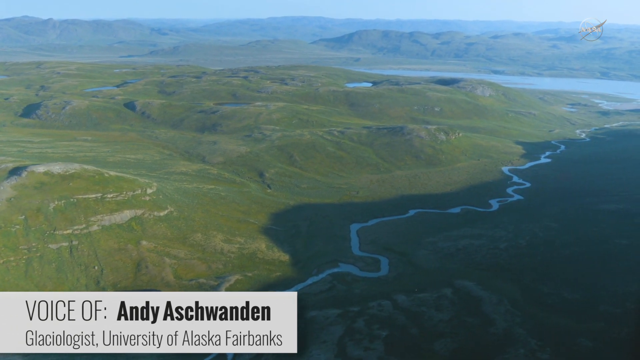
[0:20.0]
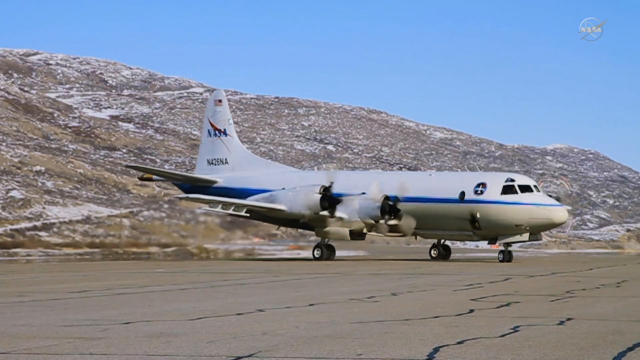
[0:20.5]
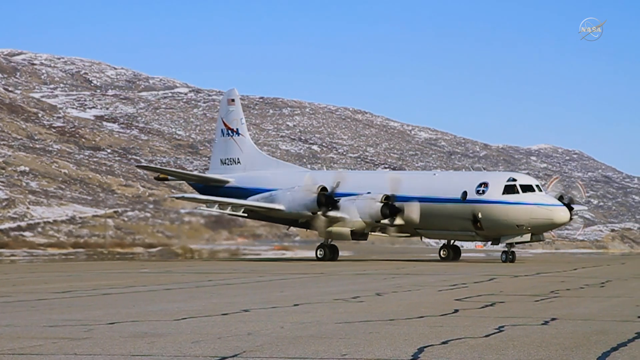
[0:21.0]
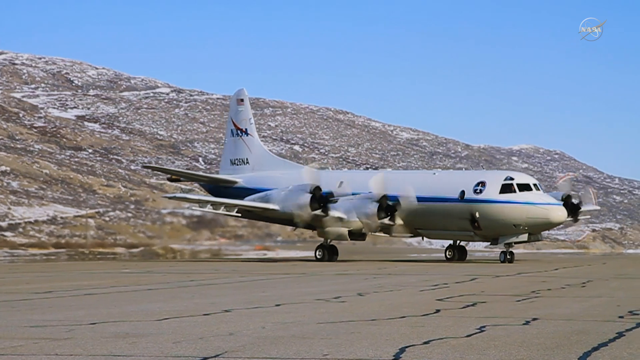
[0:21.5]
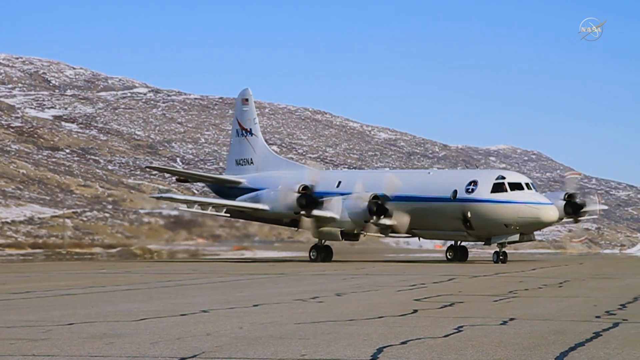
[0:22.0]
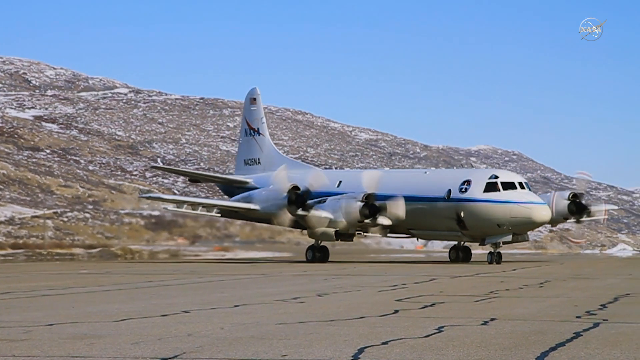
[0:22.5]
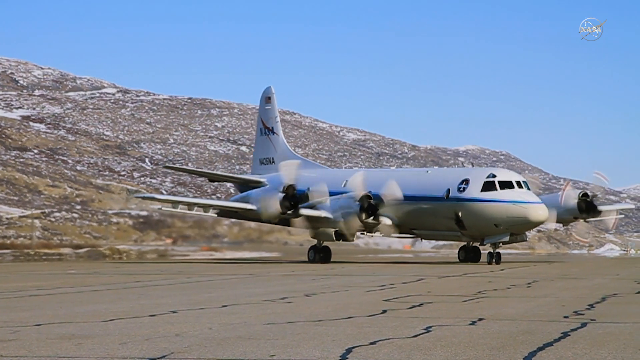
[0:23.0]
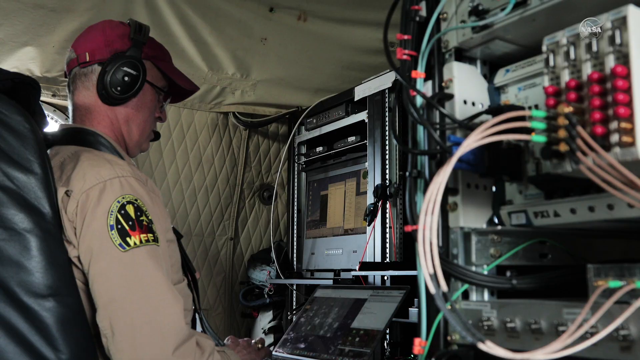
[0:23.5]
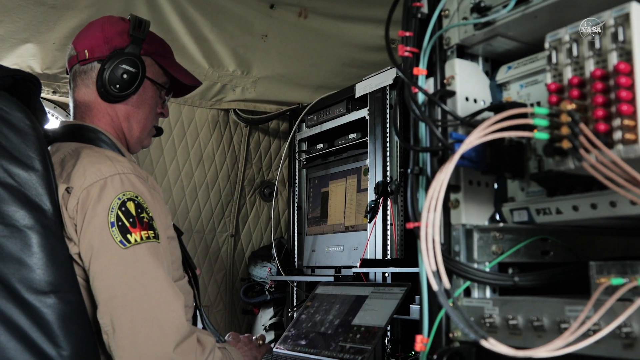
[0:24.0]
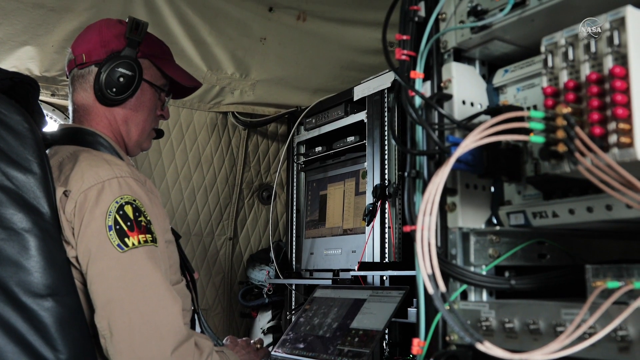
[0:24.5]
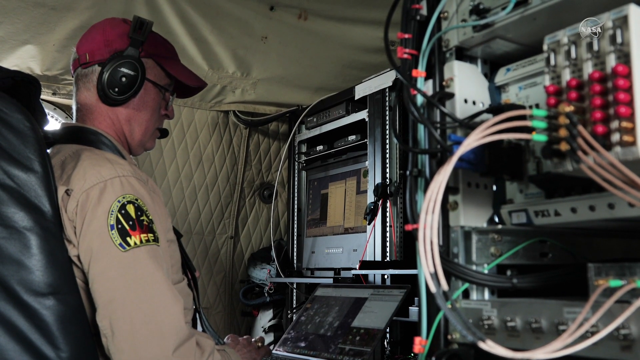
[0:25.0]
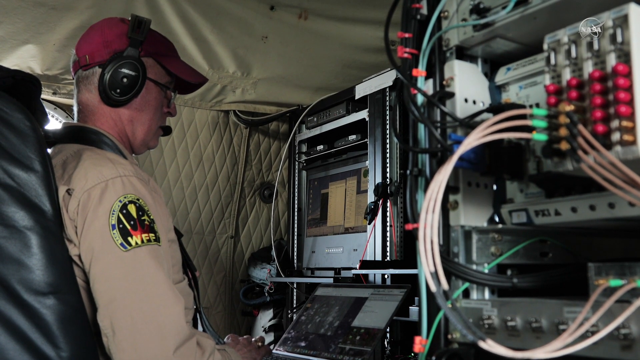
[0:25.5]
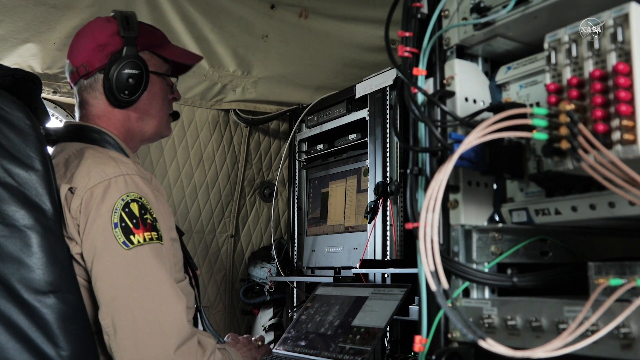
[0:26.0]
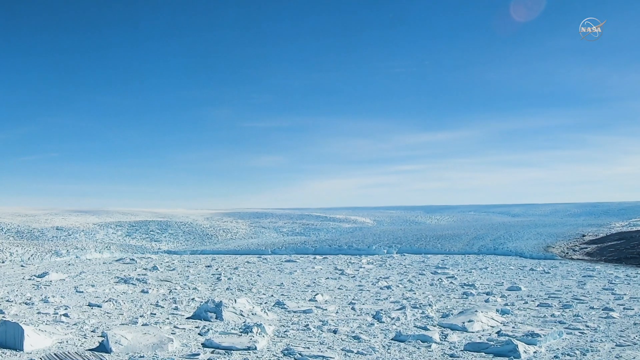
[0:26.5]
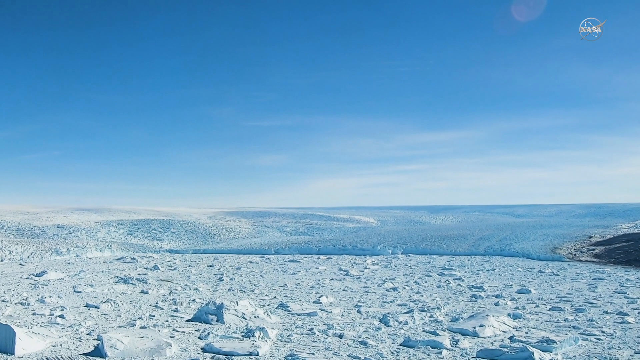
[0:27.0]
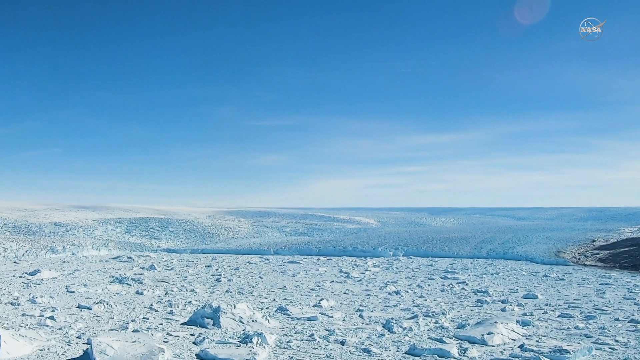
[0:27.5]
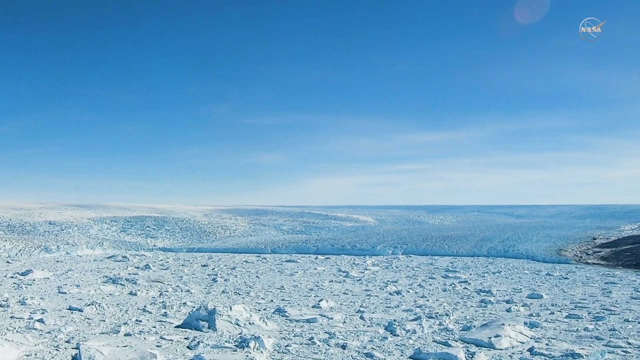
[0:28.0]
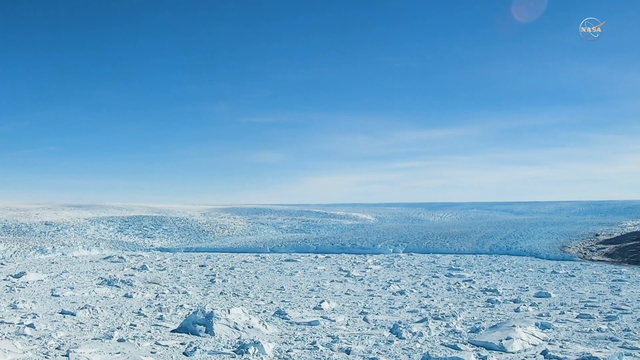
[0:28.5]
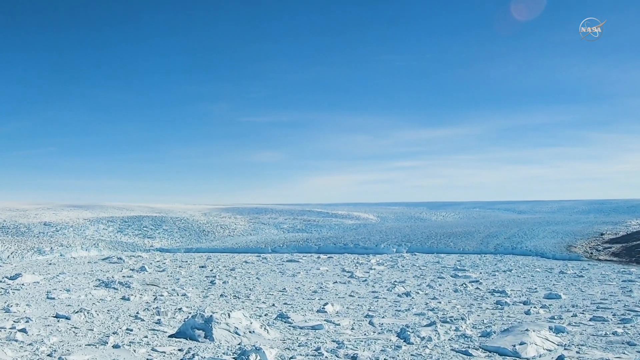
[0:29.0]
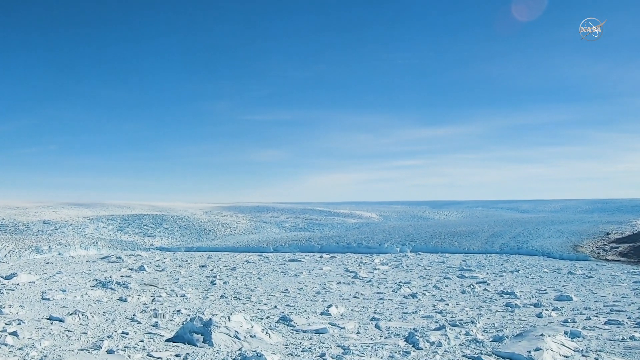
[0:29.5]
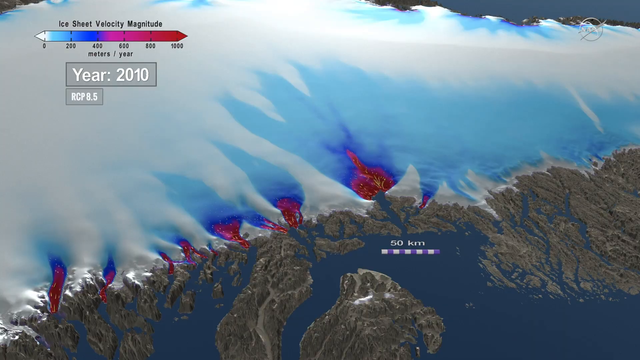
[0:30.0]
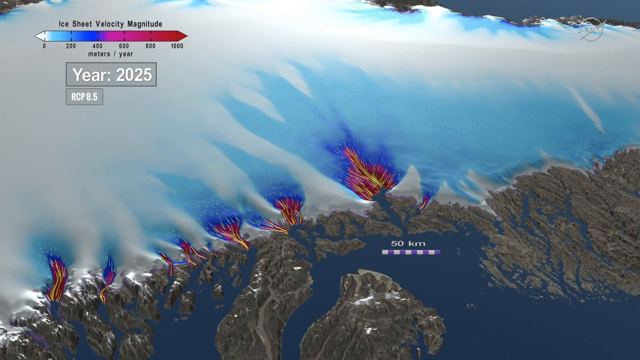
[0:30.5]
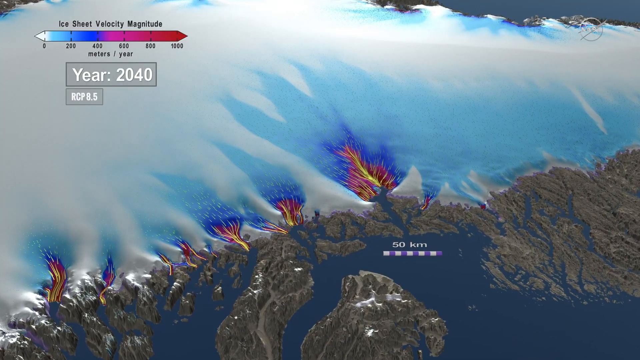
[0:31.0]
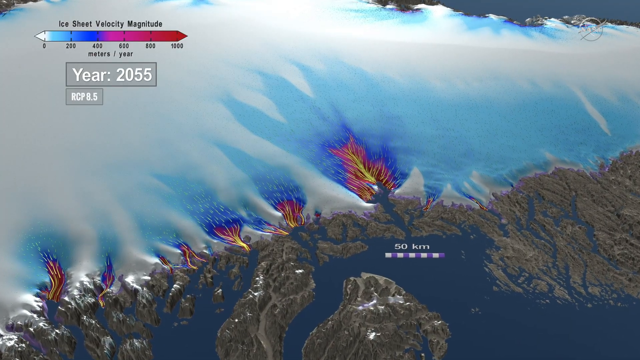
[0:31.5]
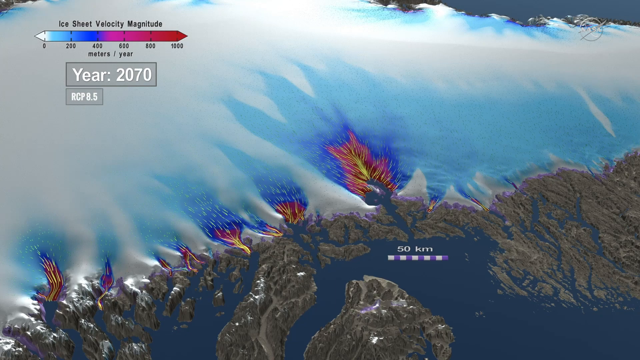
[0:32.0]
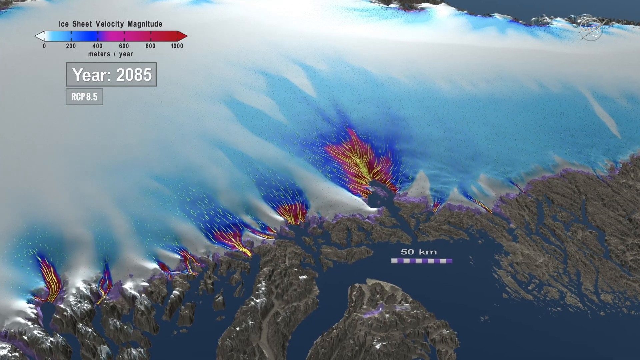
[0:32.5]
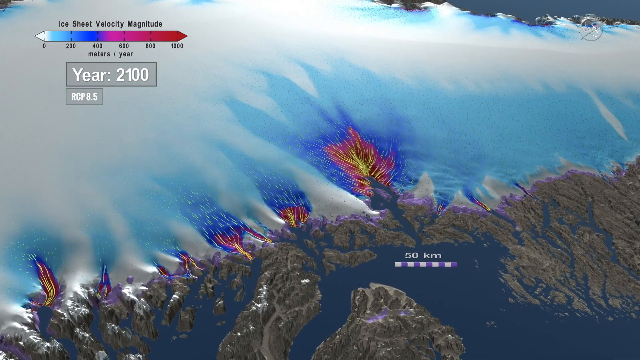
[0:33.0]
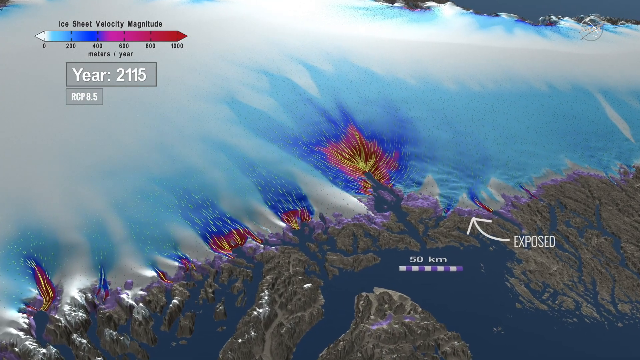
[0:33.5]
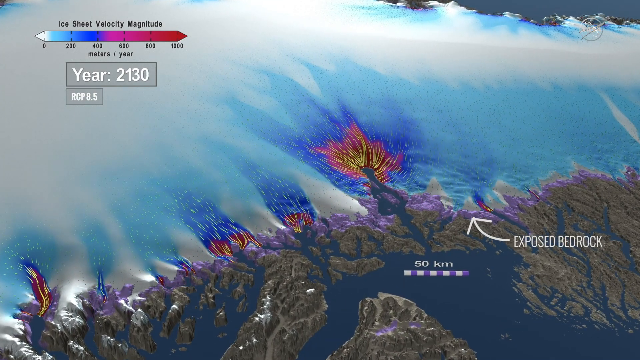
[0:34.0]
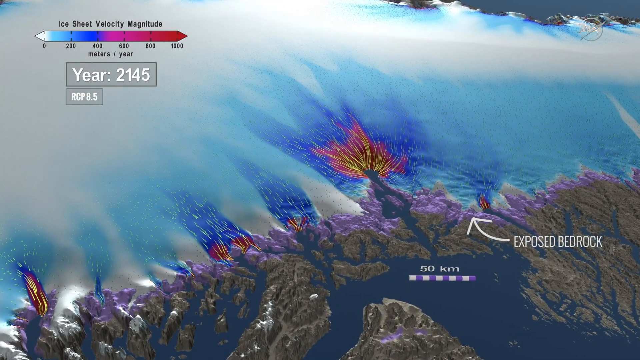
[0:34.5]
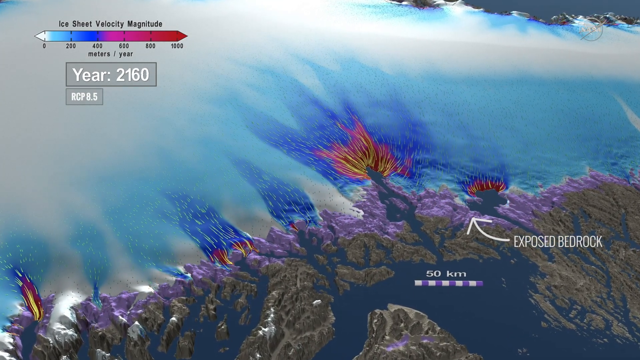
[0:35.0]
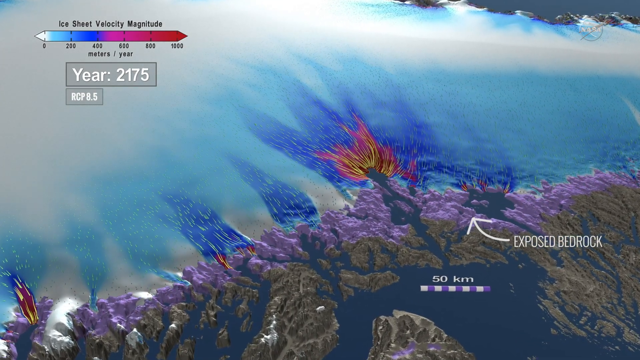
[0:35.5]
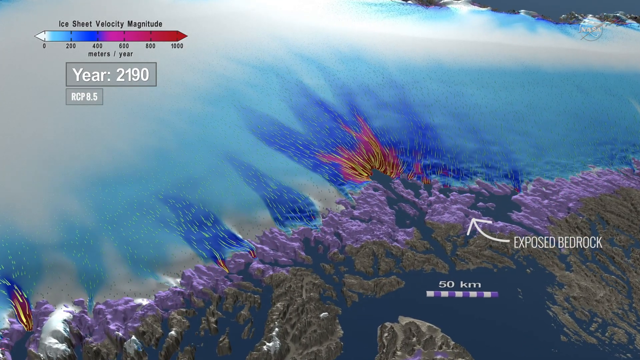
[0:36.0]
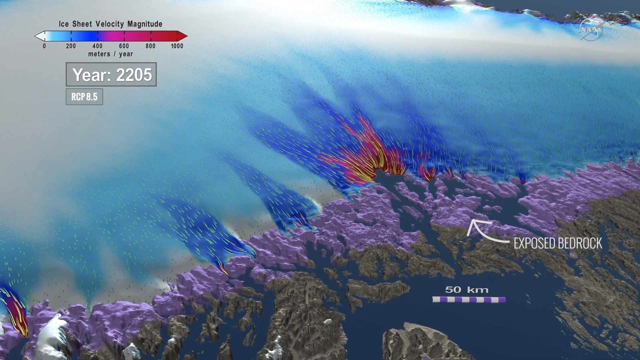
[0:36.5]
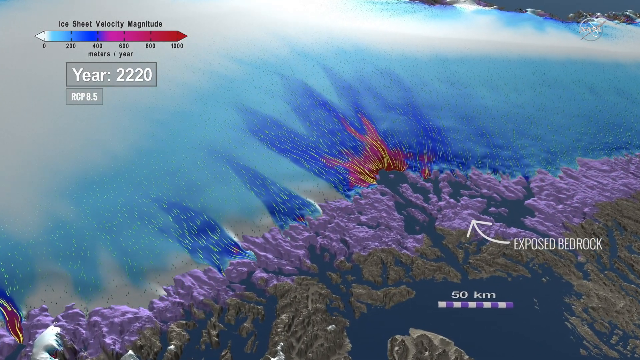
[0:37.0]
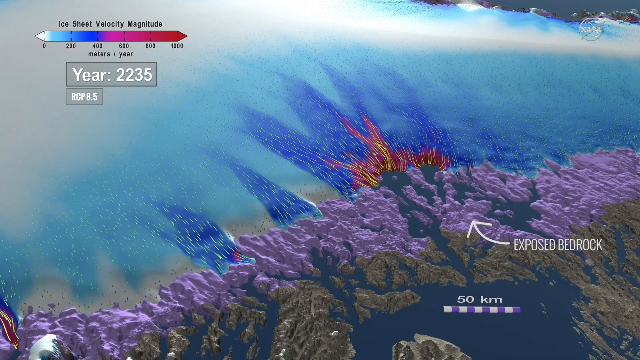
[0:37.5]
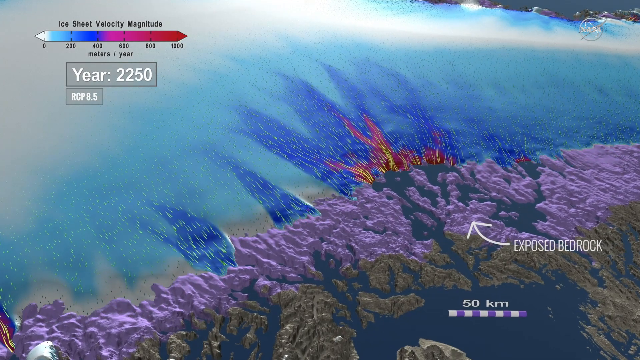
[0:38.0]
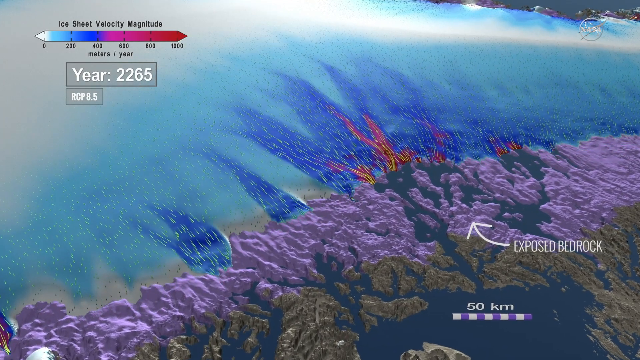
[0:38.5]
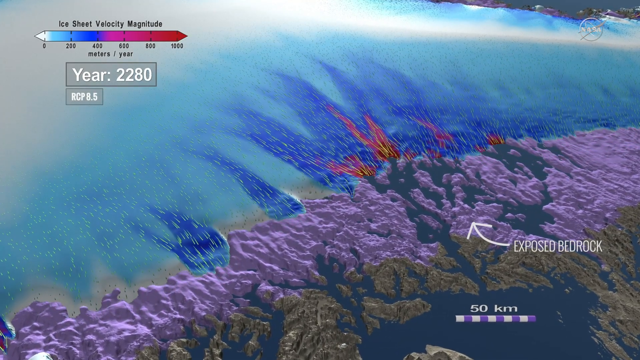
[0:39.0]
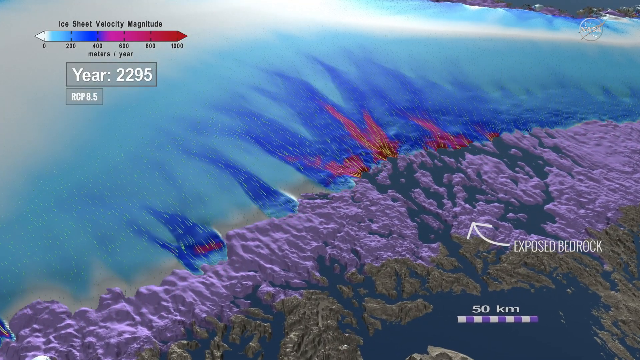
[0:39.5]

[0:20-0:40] The hills and valleys of Alaska in the summertime have grass, green trees and other plants growing throughout them. In the very center, a small river runs toward the upper right and into a larger river in the distance. A four-engine plane with four propellers on the front makes a turn on a runway. Inside the plane, one of the engineers looks at electronic equipment while the plane is either taxiing on the runway or in flight. A wide shot shows glacier activity in Alaska in the wintertime, with glaciers stretching for miles as far as the eye can see. The scene then changes to an animated graphic that apparently shows glacier activity: glaciers are in the upper left, and in the lower right are land areas, with what are probably ocean inlets to the right of the glaciers. A key in the upper left corner is an ice sheet velocity magnitude key. Eventually an area in the lower right is labeled "exposed bedrock," with an arrow pointing to it.